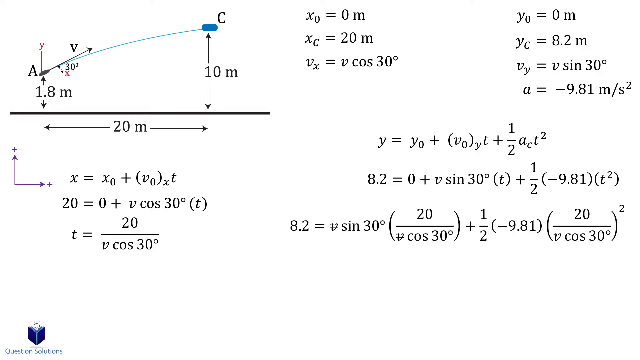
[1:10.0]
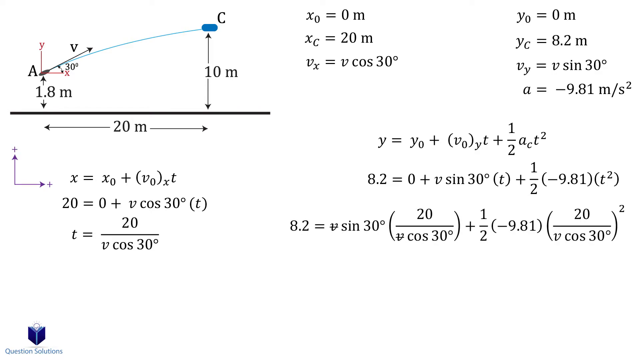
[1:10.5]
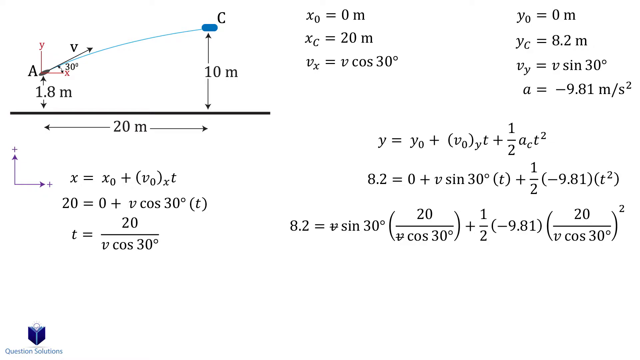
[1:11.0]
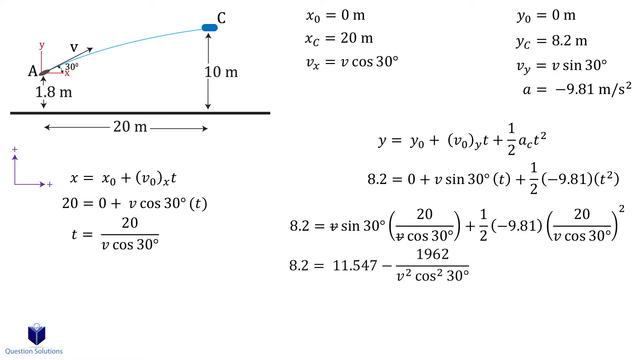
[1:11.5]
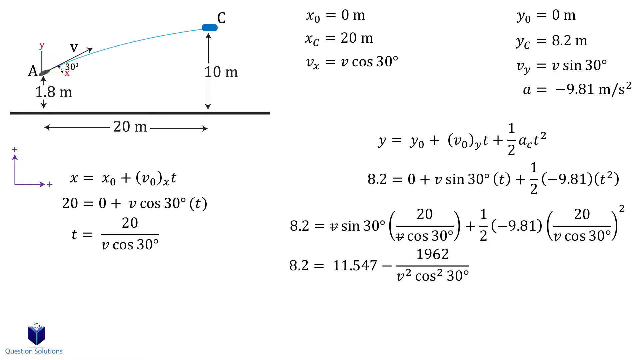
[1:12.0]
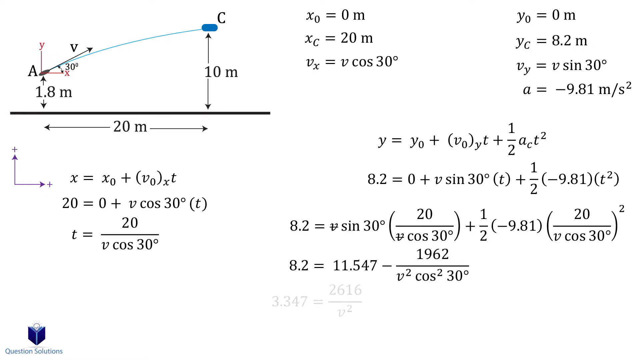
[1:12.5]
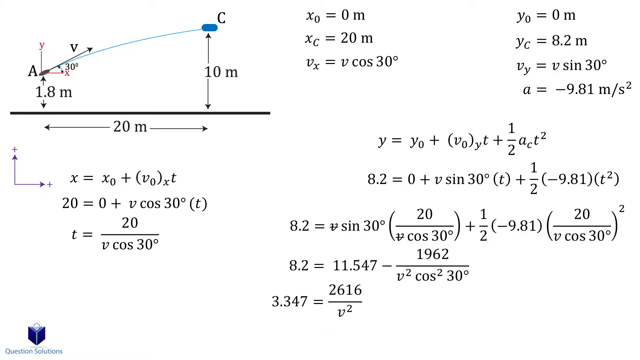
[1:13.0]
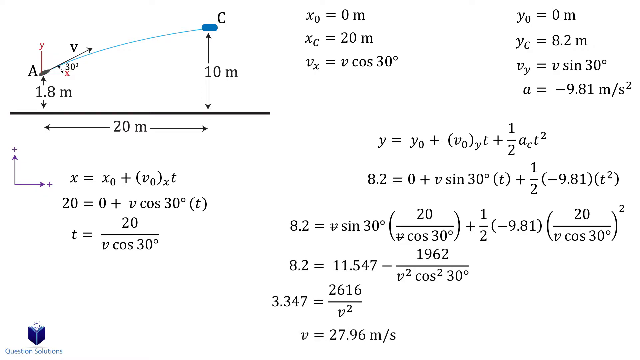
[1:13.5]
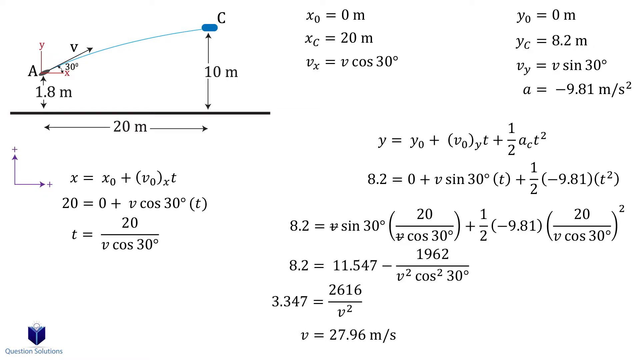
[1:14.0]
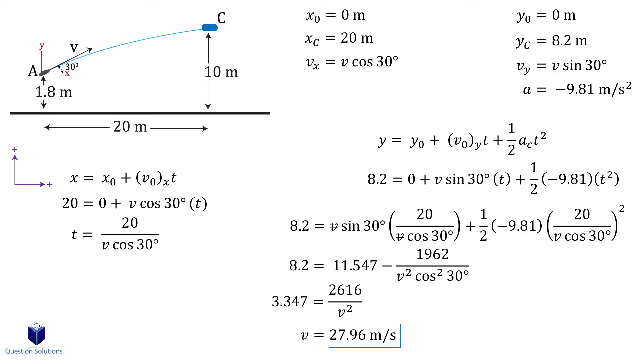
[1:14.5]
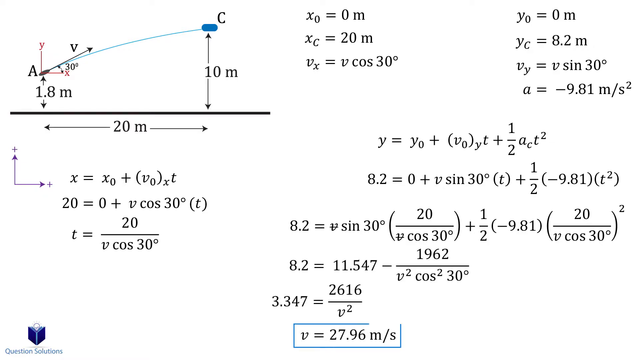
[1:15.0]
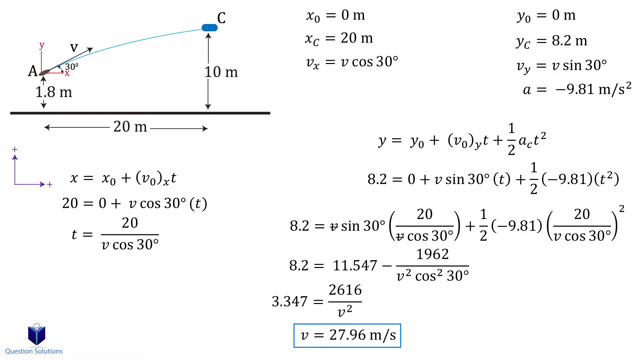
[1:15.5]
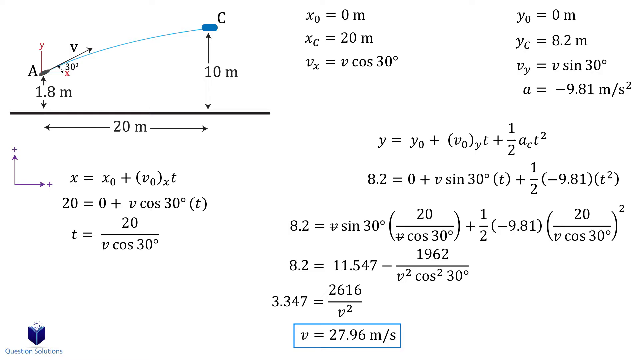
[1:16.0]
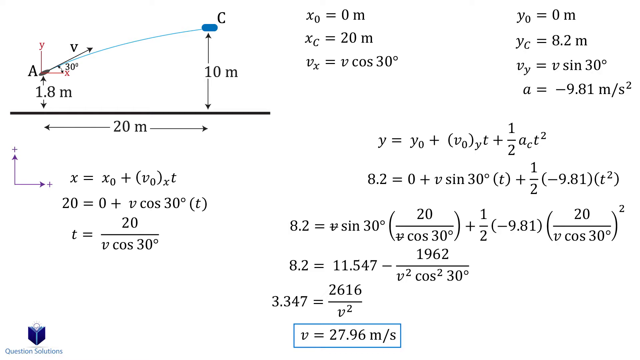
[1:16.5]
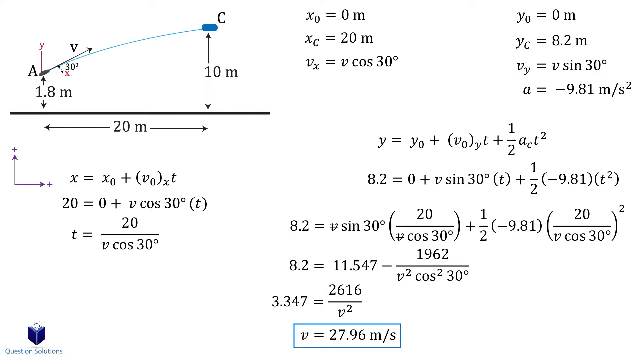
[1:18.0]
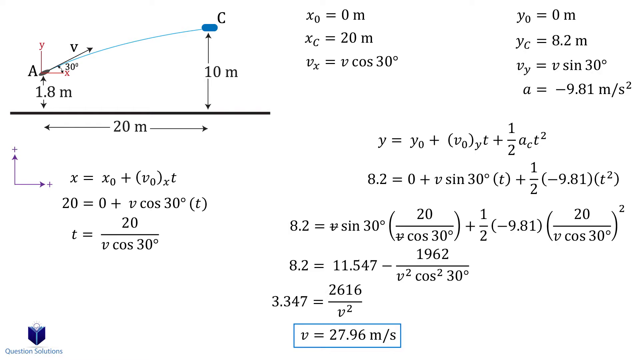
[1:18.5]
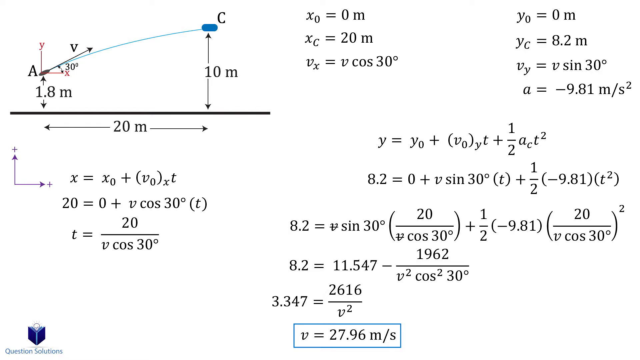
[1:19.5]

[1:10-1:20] The white screen is almost covered with numbers. The graph is on the left side of the screen, rendered in small black font, and the bottom is almost full of equations. In the middle right part of the screen, an equation begins "y equals y0 plus (v0)y t" followed by a one-half term. Beneath it is an equation reading "8.2 equals 0 plus (v sine 30 degrees t)" plus one half of negative 9.81 times t squared, and beneath that "8.2 equals v sine 30 degrees (20 divided by v cos 30 degrees) plus one half times (negative 9.81) times (20 divided by v cos 30)."